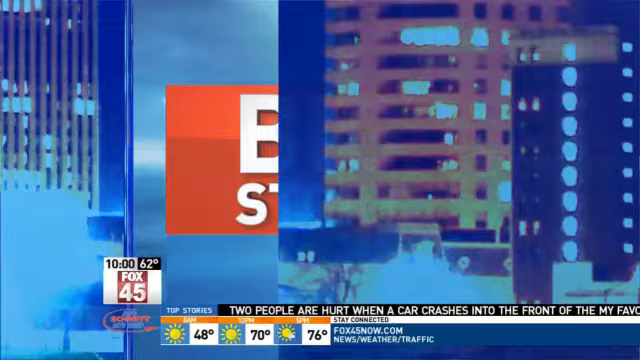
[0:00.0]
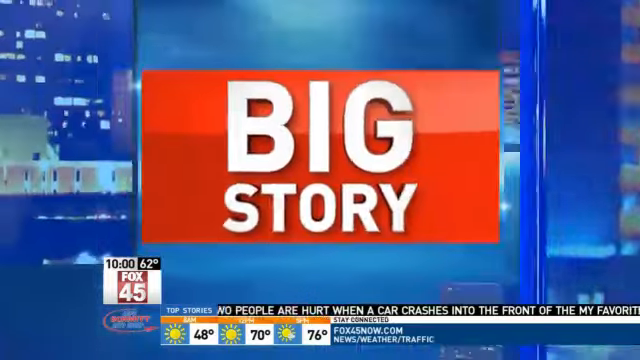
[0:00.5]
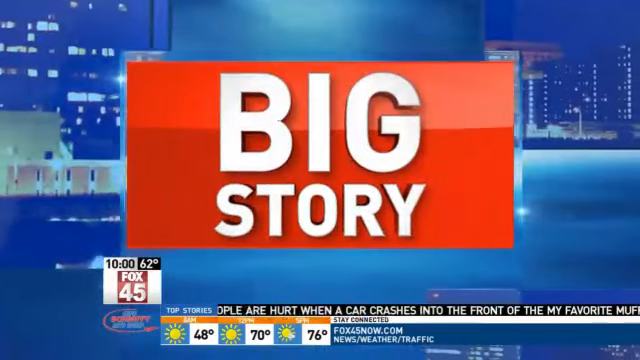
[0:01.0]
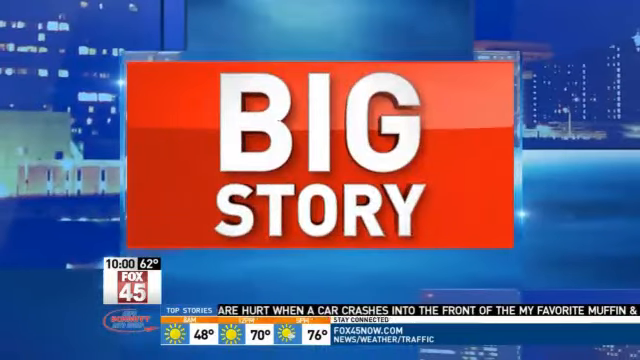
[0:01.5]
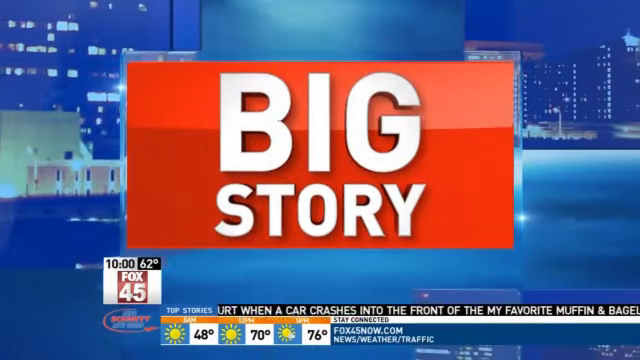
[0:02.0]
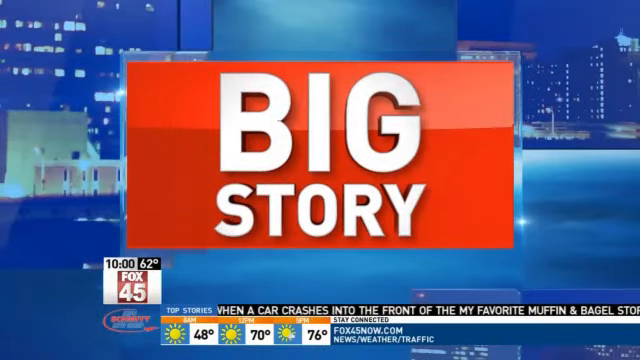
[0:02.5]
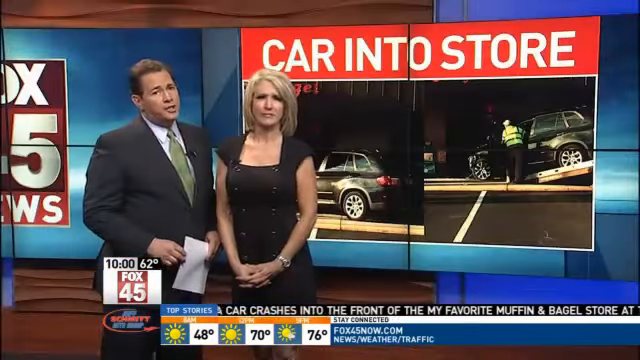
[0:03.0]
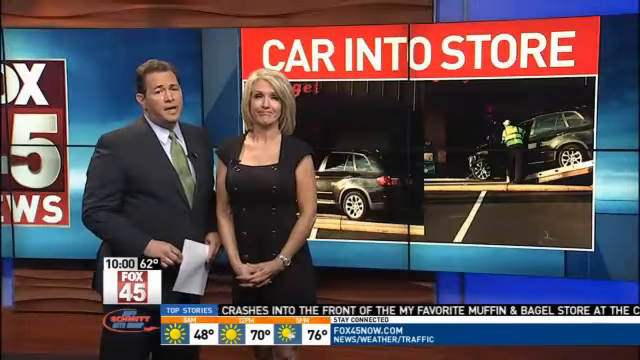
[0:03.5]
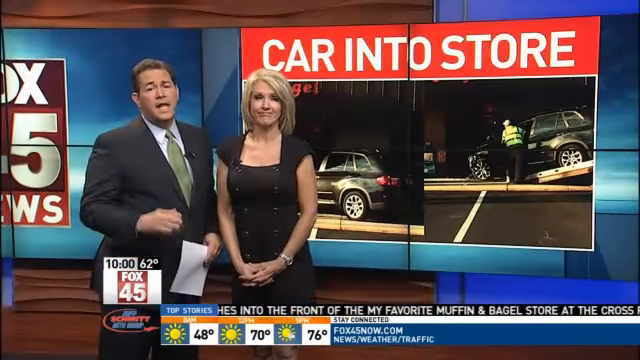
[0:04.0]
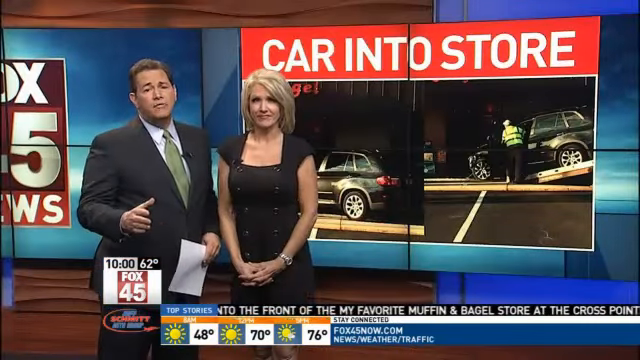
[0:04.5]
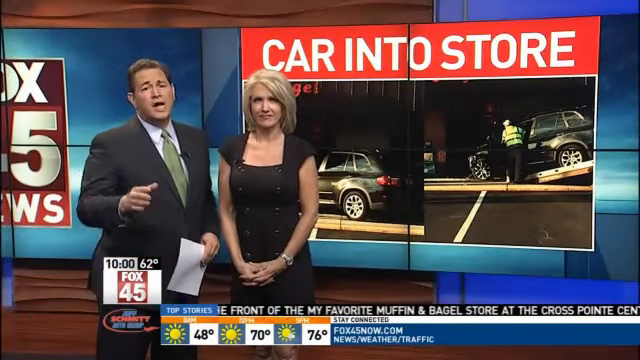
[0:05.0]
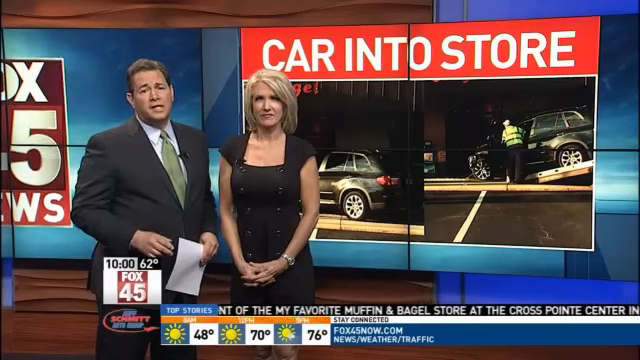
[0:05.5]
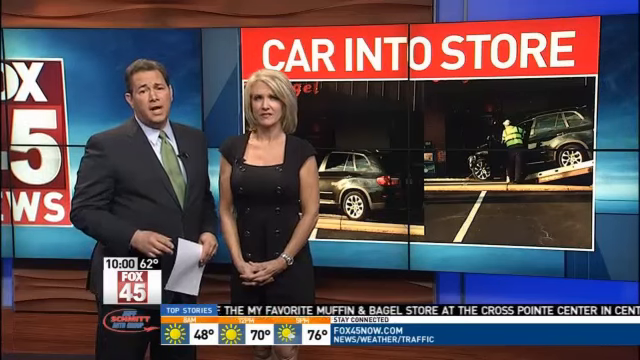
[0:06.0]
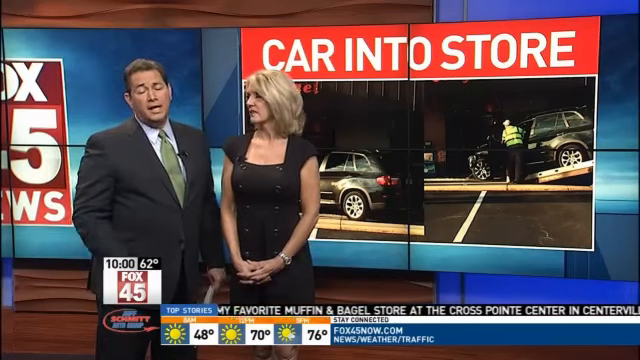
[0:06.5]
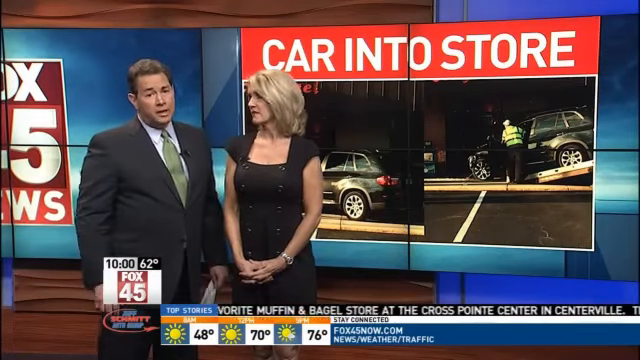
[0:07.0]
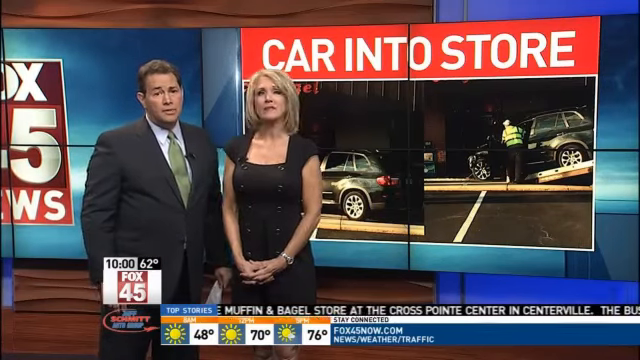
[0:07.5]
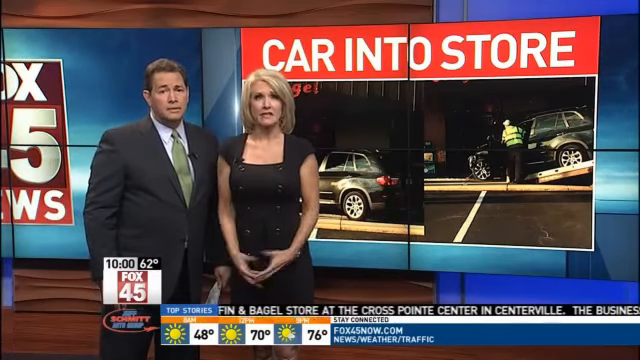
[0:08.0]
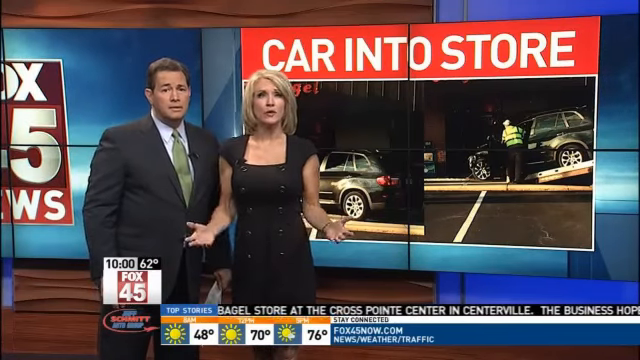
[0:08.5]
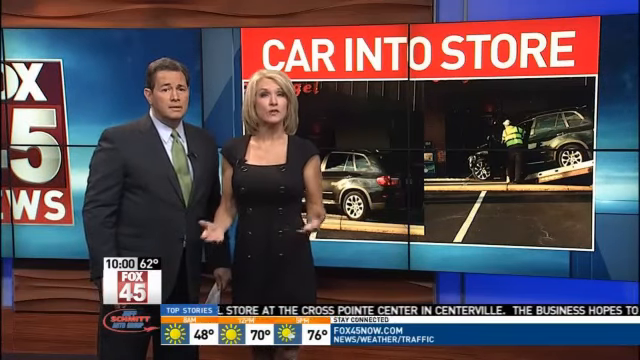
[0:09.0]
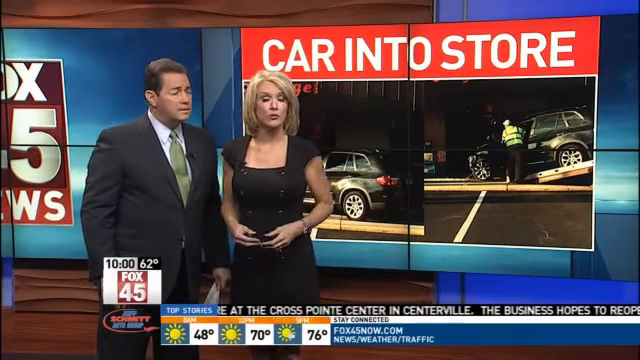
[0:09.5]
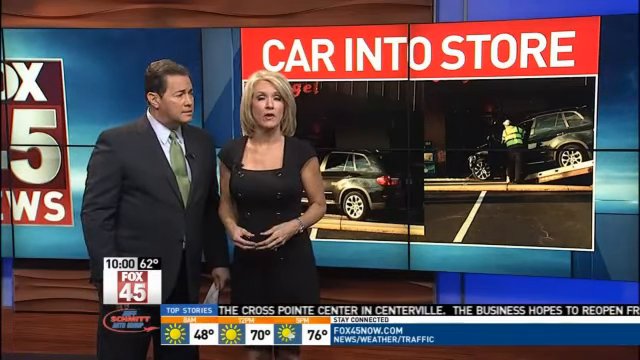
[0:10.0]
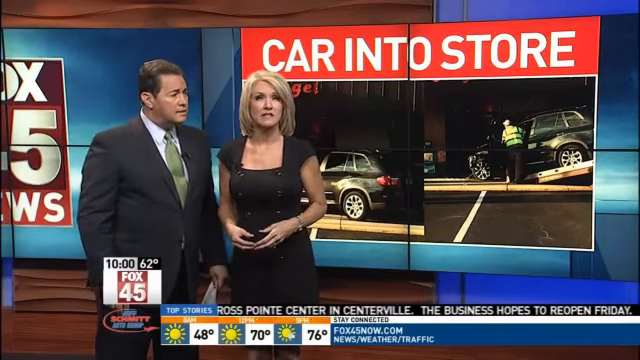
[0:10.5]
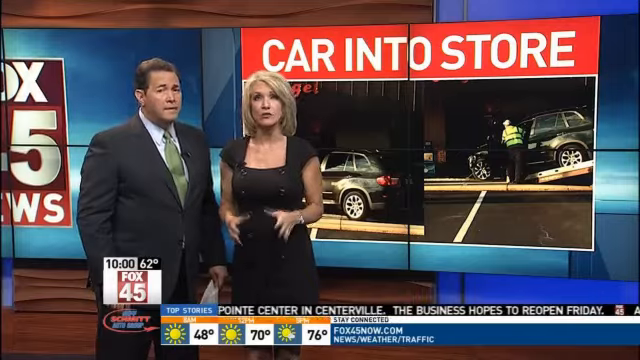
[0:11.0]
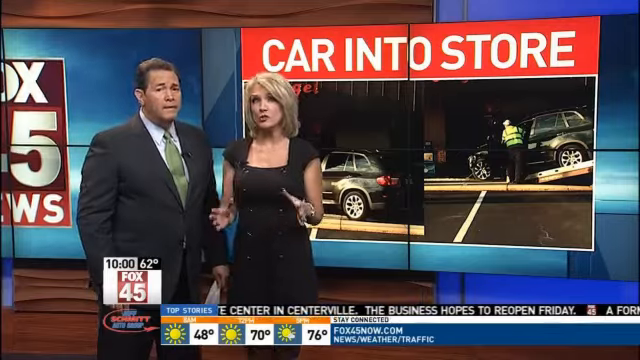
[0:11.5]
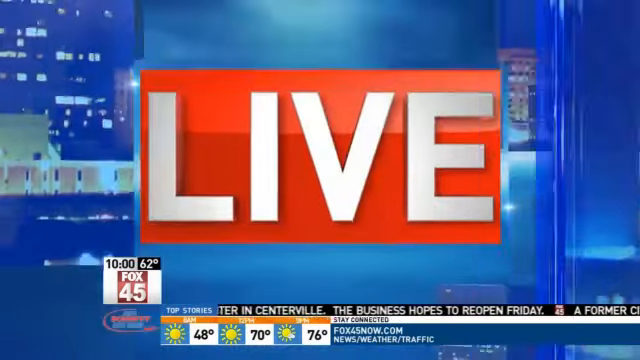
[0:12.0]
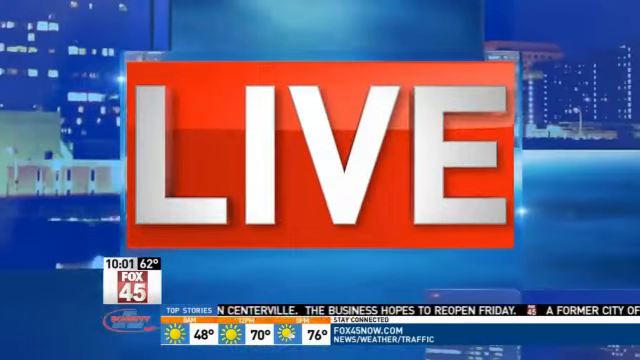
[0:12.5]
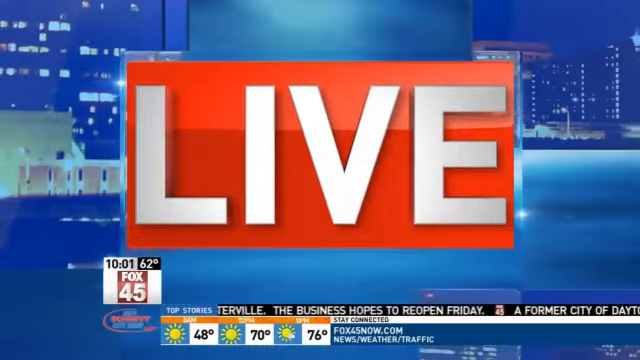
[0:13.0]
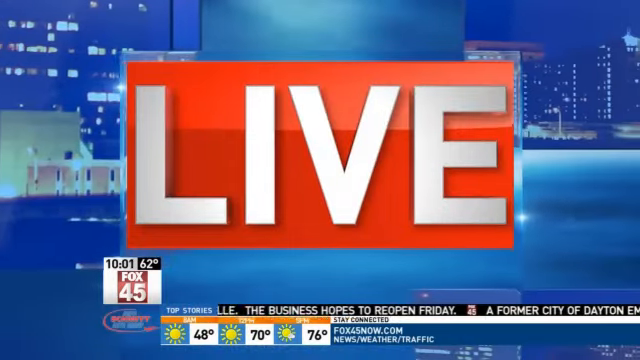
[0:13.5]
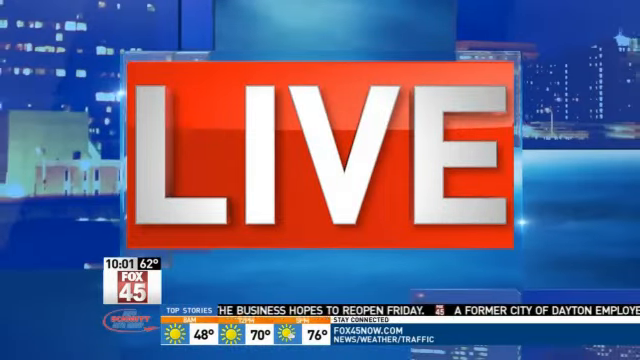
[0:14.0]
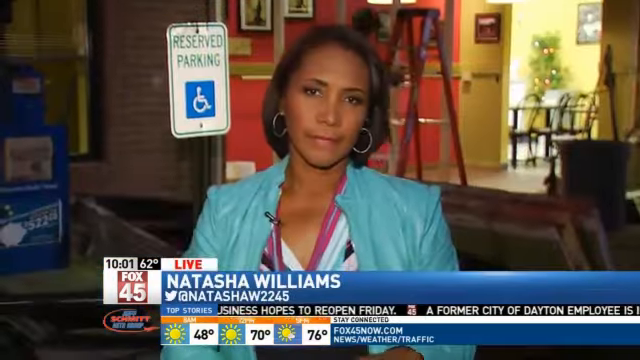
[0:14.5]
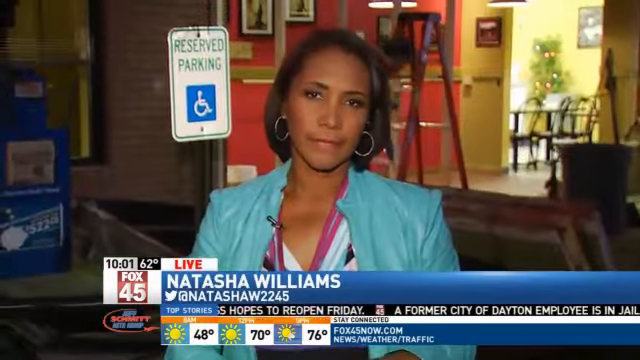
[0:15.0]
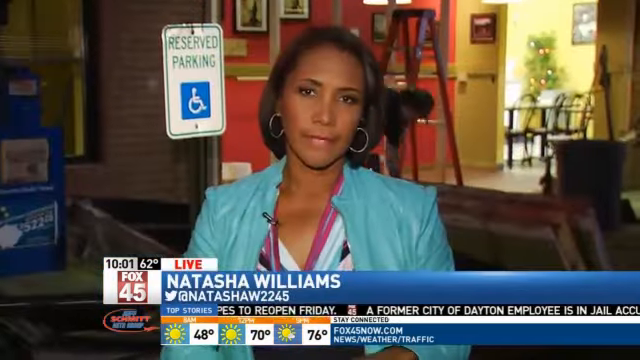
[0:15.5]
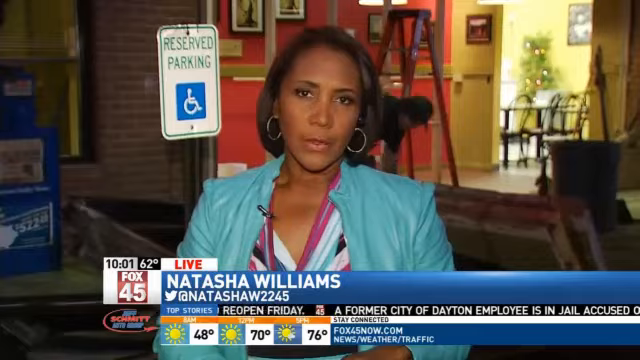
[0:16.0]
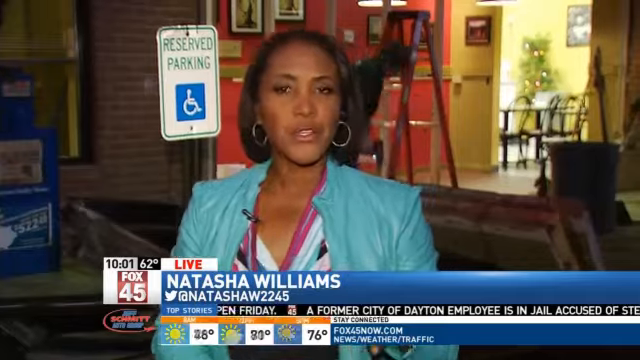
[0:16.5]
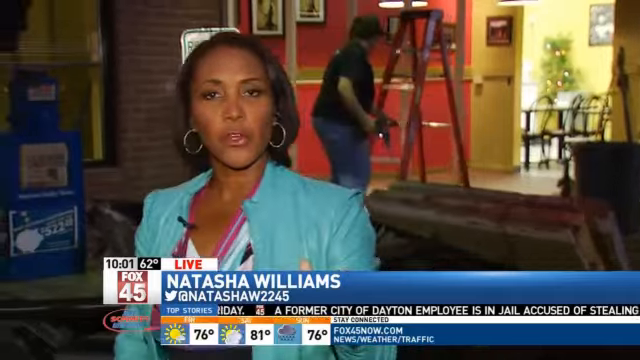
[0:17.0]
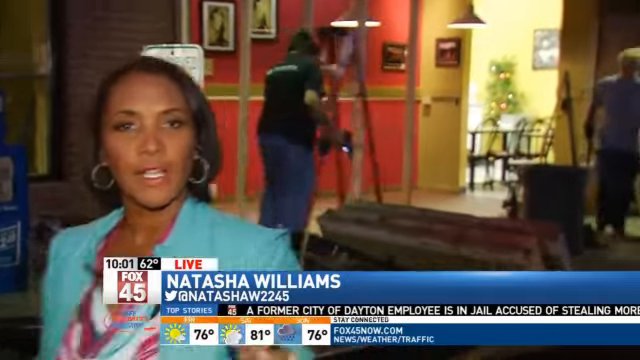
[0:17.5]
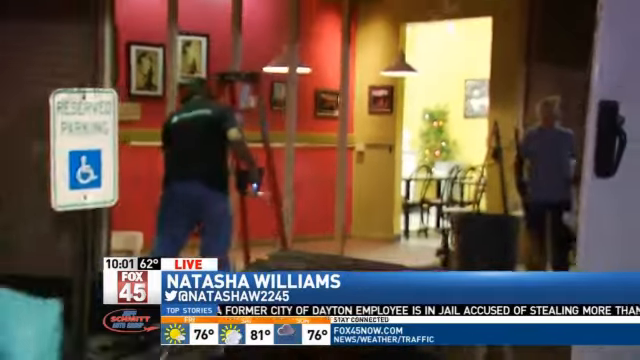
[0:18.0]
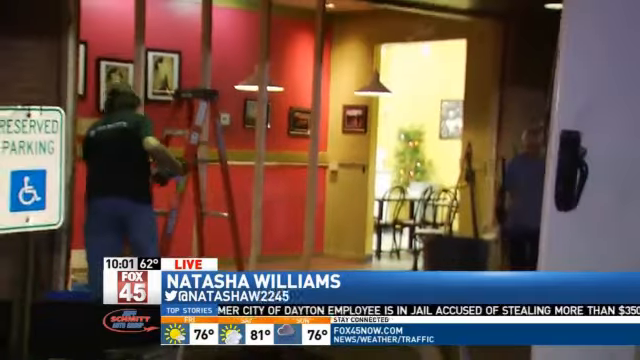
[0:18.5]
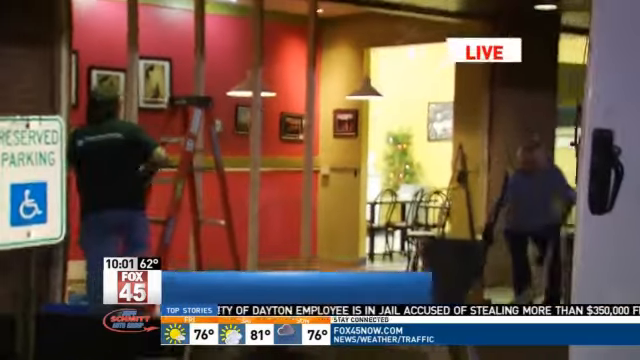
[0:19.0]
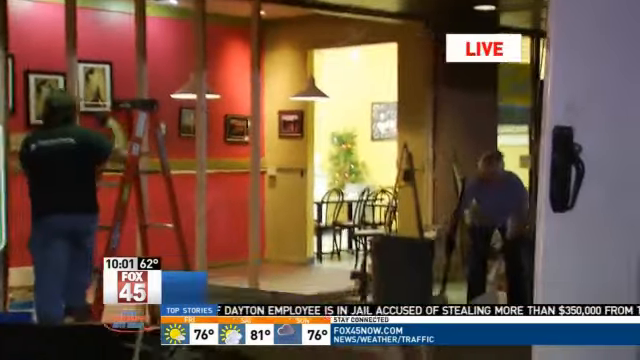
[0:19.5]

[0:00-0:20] The video comes from Fox 45, with the time shown as 10 o'clock and the temperature as 62 degrees. Two newscasters stand in front of a screen that reads "car into store": a man in a suit and tie with a white button-down shirt, and a woman in a black dress. The word "live" appears in big white letters on a red square. Reserve parking is visible. Another reporter, Natasha Williams, is out on the street; below her name, the times of day and the weather for each are shown. Behind her is the scene where the car went through the store, seen only very briefly. Behind the two initial reporters is a picture of the car in the store, but it is behind the woman, so it is hard to see. There is also a picture of the car going onto a tow truck, and one of men working in the store on a ladder, repairing it.